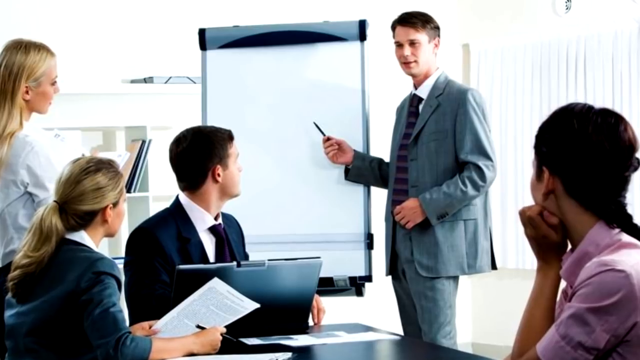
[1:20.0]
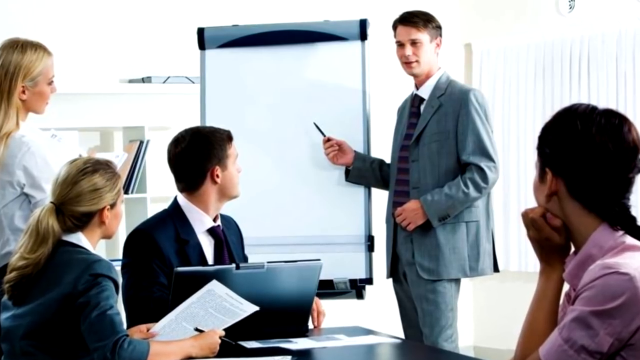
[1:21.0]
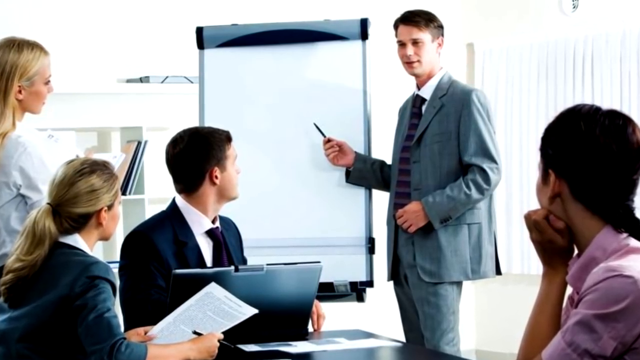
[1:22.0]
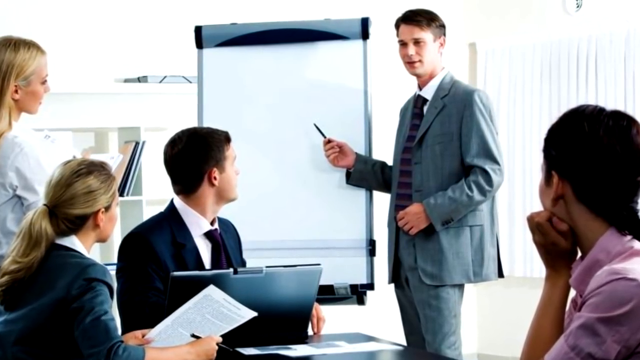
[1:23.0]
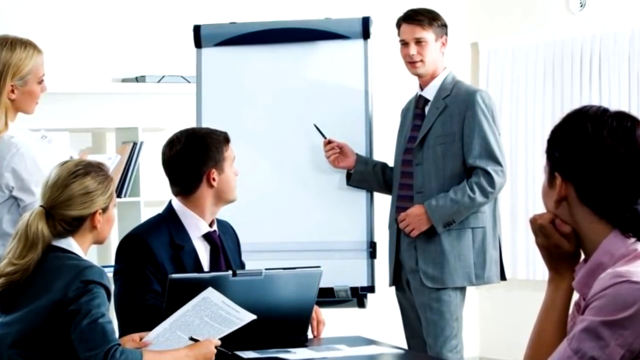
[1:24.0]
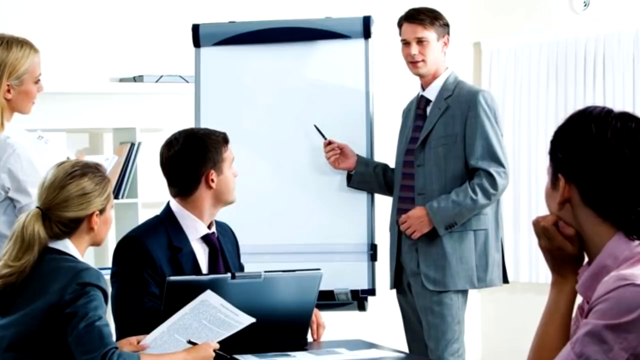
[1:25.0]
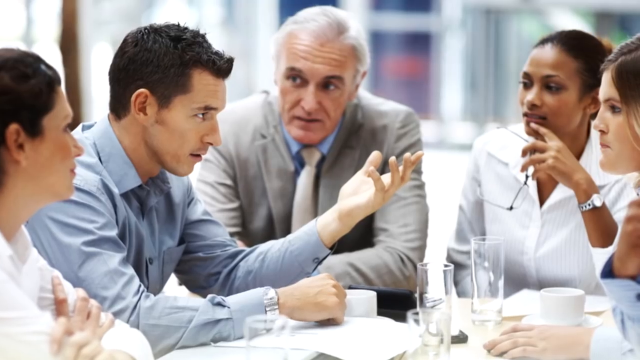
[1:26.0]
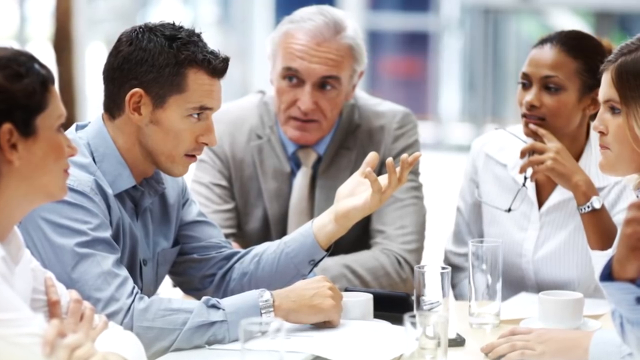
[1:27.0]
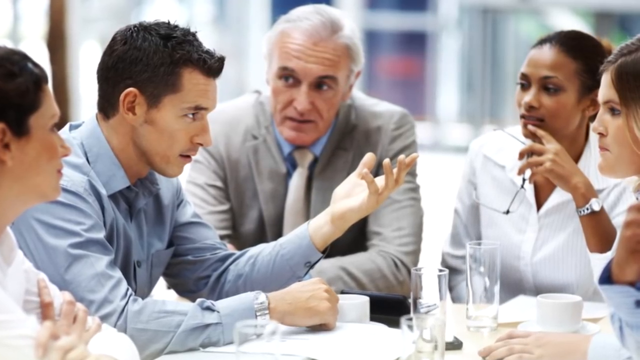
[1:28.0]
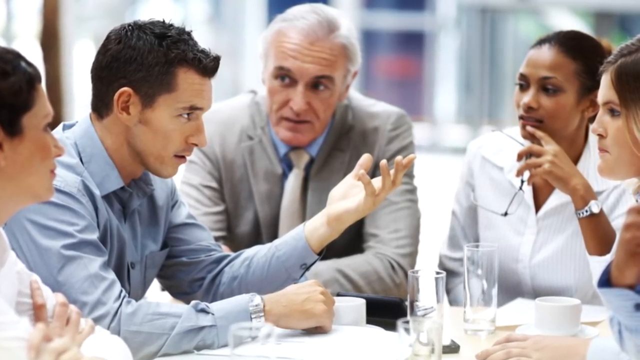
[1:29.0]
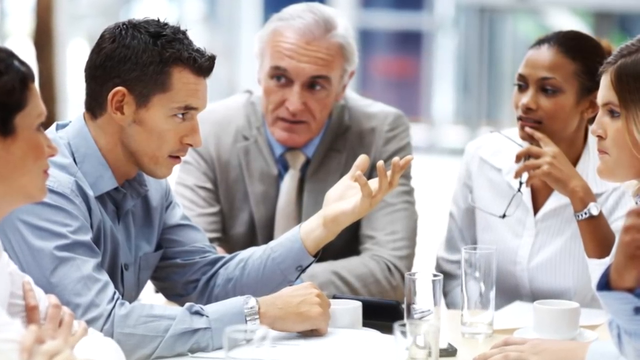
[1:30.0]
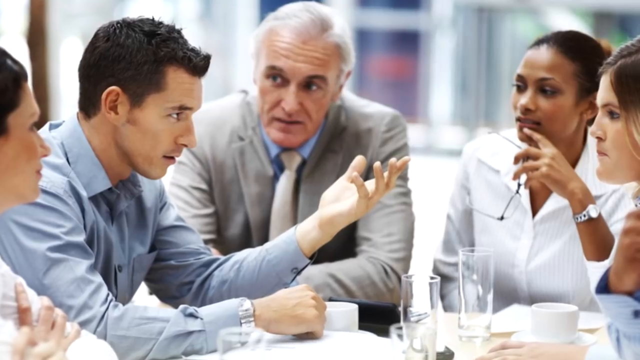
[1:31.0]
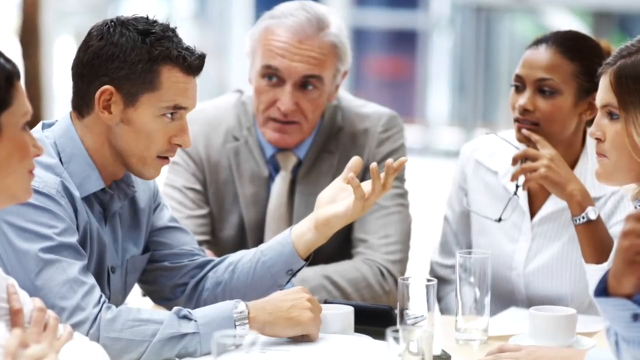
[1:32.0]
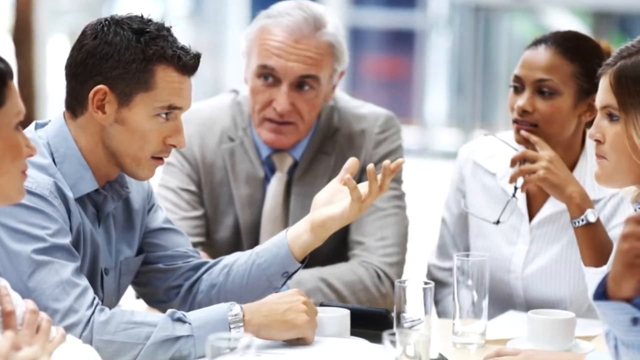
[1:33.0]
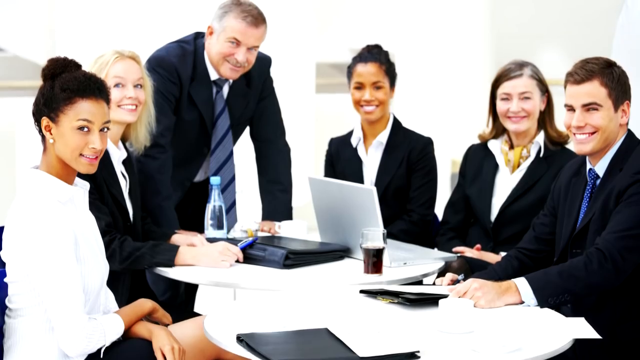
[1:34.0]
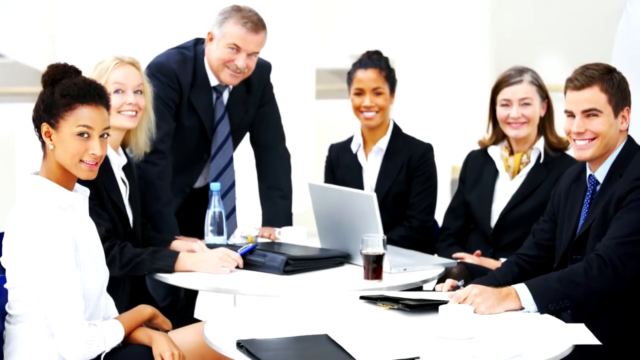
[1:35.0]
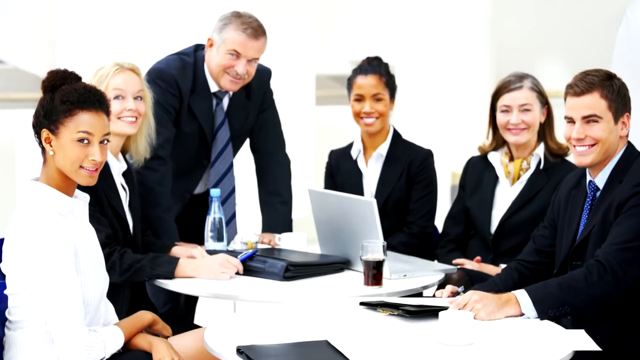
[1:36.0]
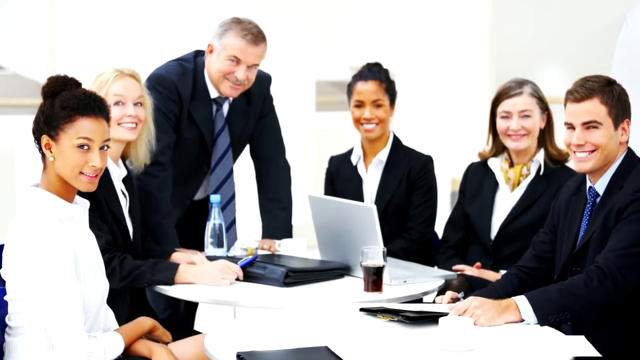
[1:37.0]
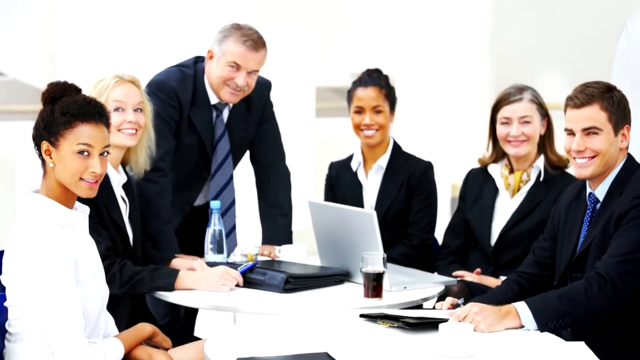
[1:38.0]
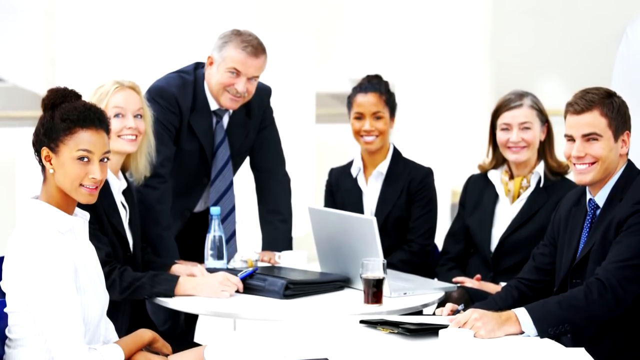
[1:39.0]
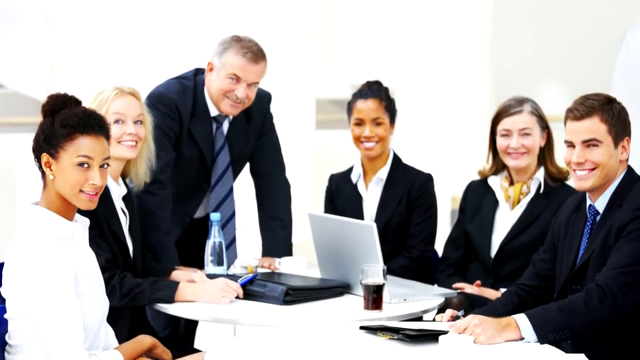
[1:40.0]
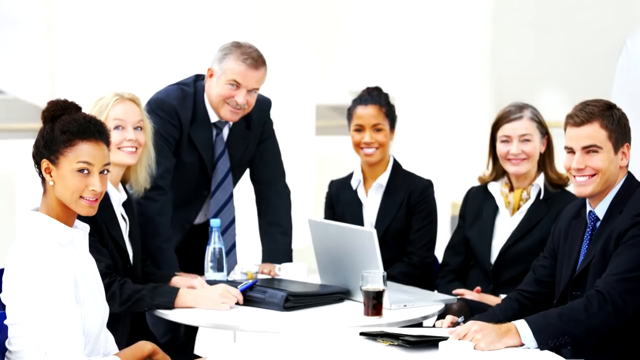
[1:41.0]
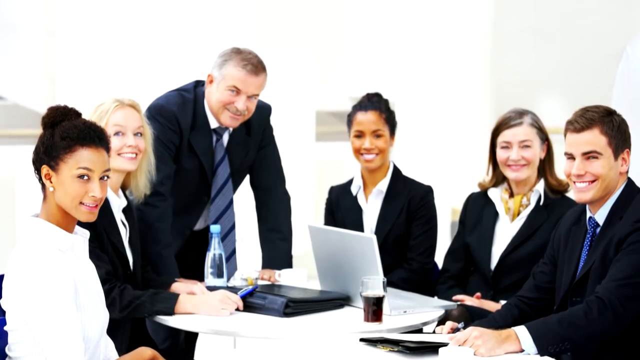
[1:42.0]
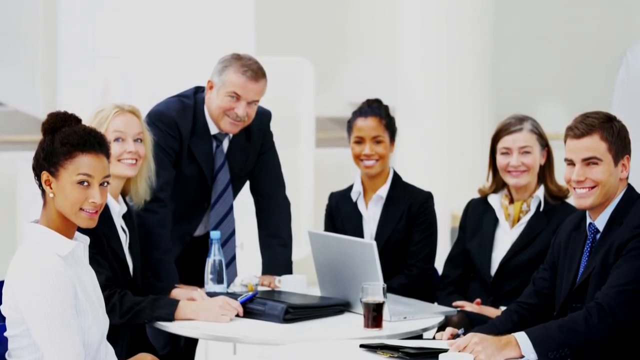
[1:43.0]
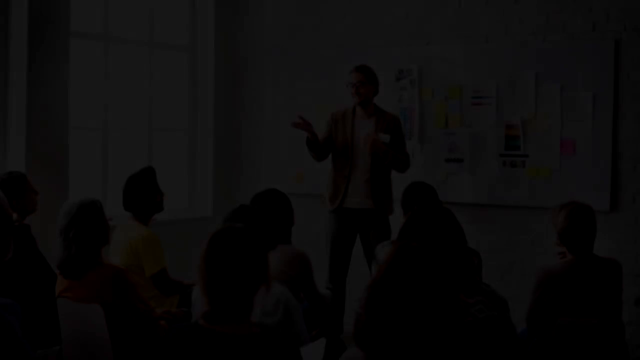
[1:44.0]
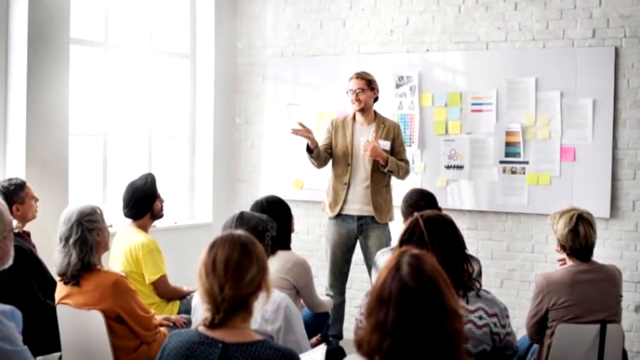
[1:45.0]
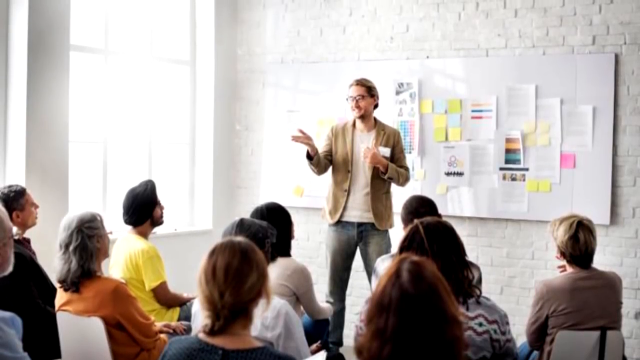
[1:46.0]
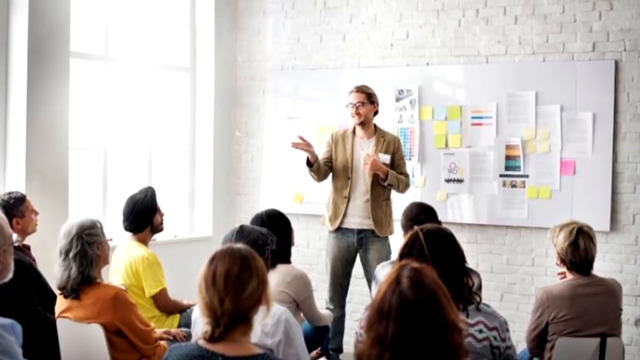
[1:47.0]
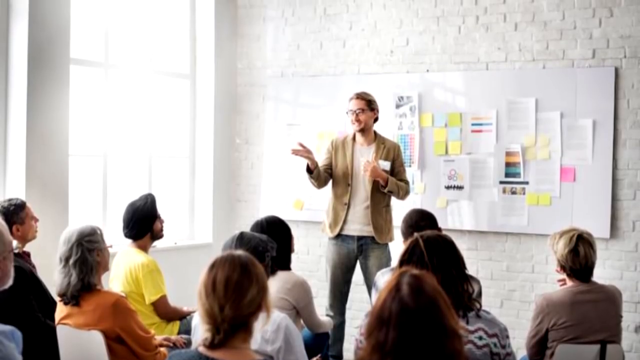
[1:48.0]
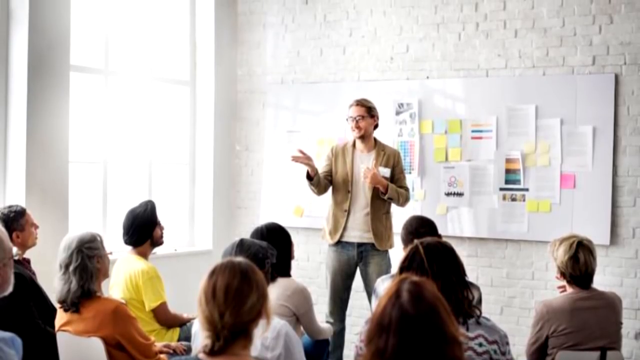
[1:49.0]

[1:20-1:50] A man in a gray suit stands at an easel board with nothing written on it, and four other people are looking at him: three women and one man, who has a laptop open in front of him. They are all dressed business smart. Another office scene shows five people kind of huddled together: a younger man does the talking, an older man watches him, and three women are also around watching them. Some glasses are on the table, and the African-American woman is holding her glasses in her hands. In another office scene, everyone at a table is sitting except one man, who has his hands on the table and is hunched down. Both men wear suits, three of the women wear jackets with collared shirts, and one woman wears just a collared shirt. Two of the people are probably in their 60s or older, and the rest appear to be in their 30s.